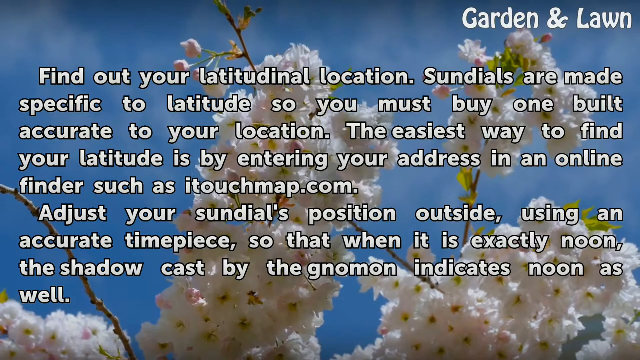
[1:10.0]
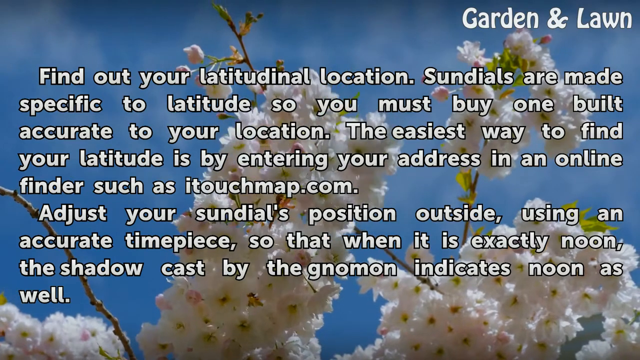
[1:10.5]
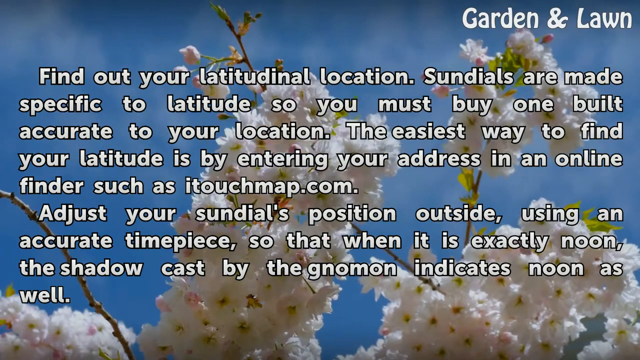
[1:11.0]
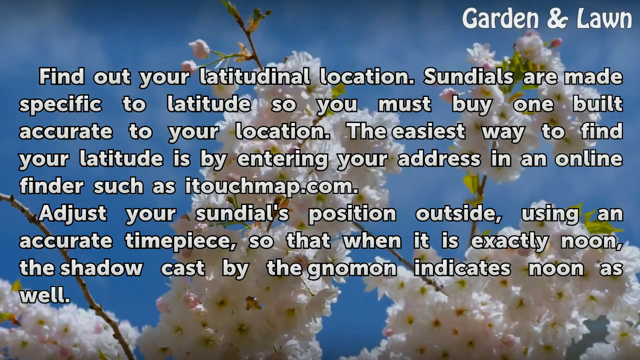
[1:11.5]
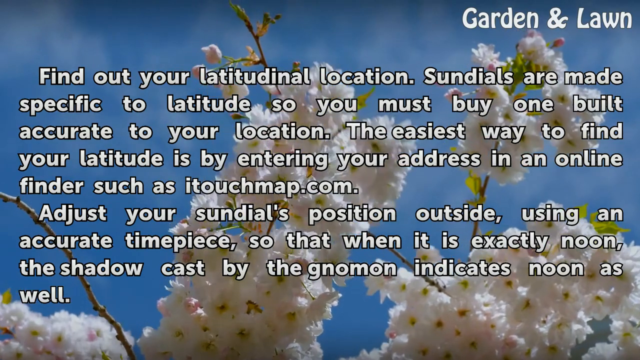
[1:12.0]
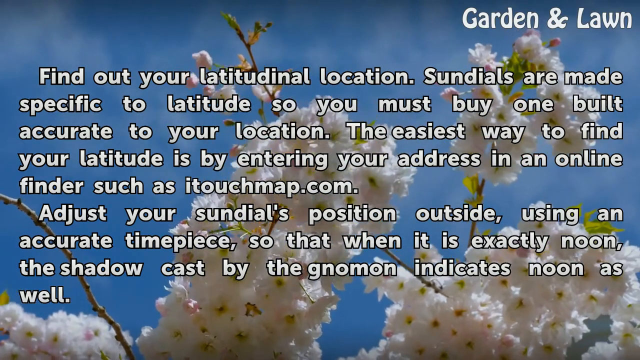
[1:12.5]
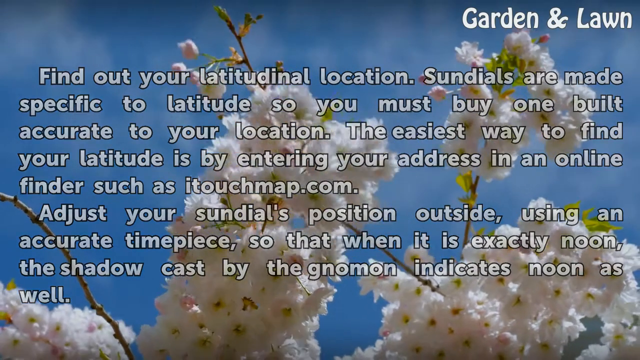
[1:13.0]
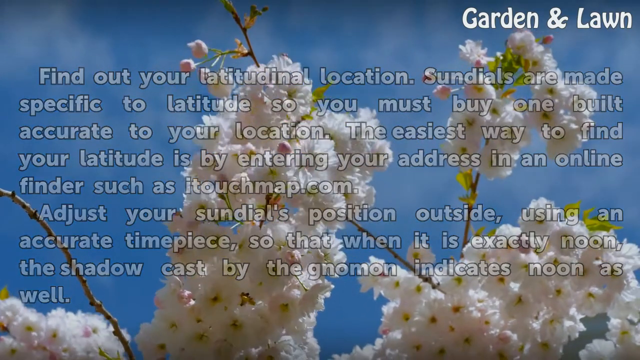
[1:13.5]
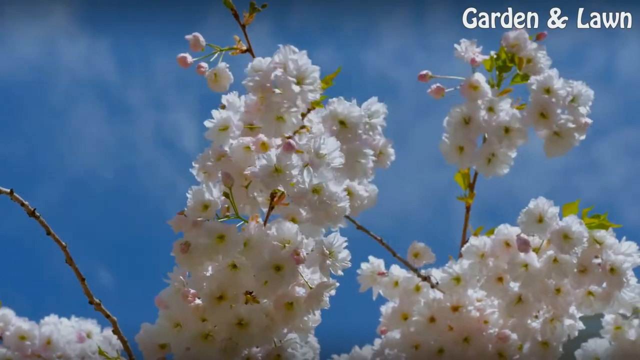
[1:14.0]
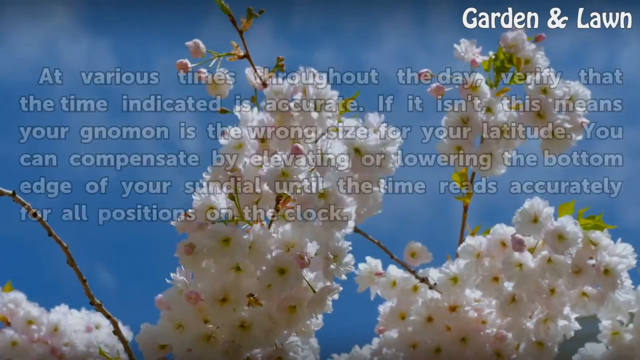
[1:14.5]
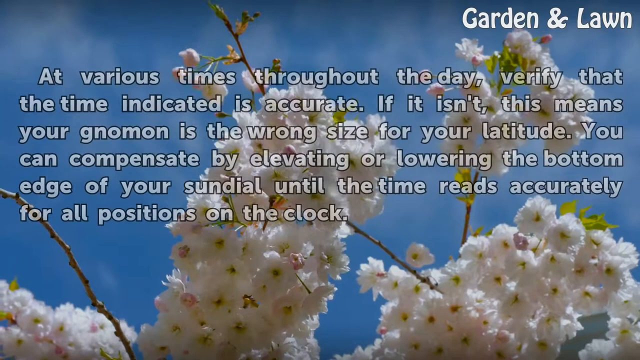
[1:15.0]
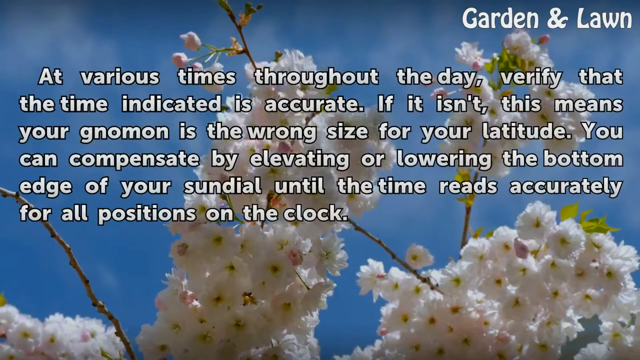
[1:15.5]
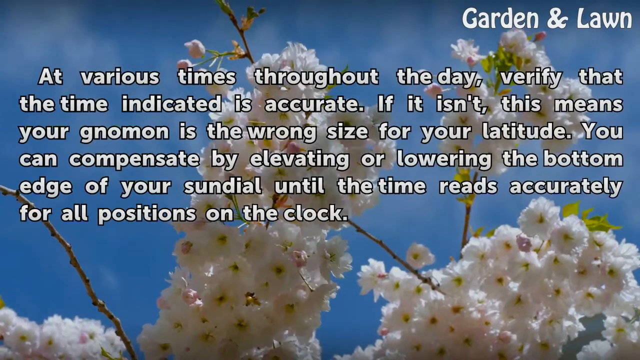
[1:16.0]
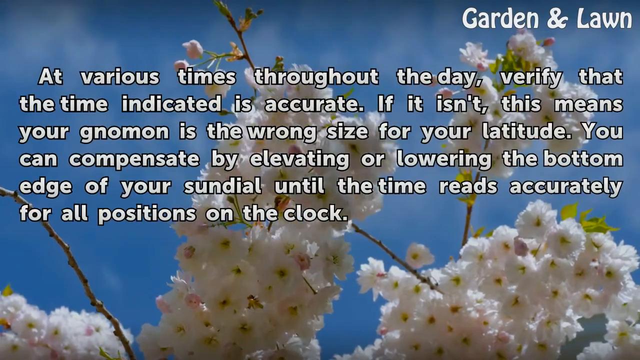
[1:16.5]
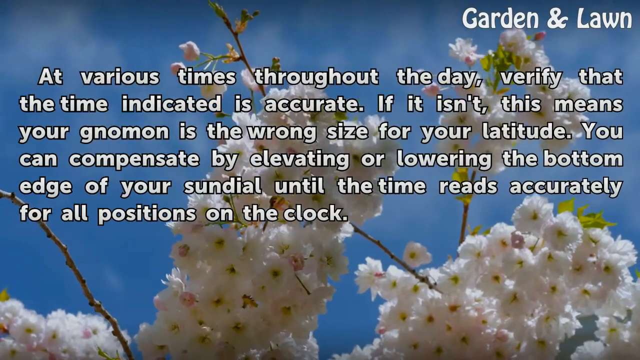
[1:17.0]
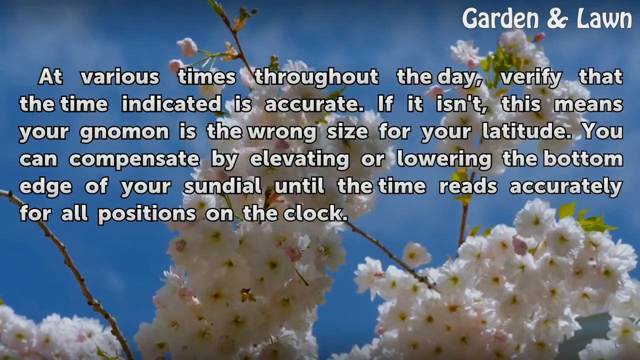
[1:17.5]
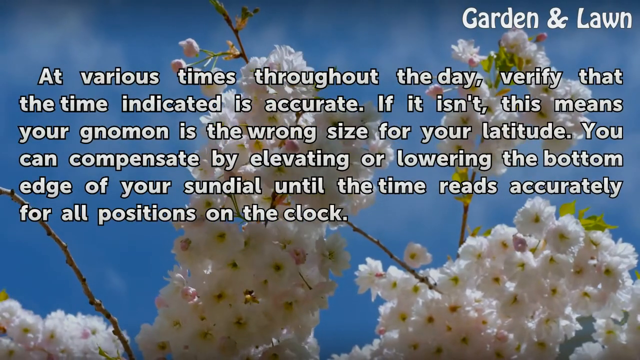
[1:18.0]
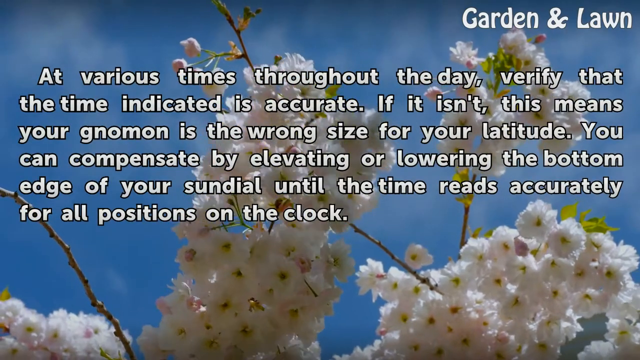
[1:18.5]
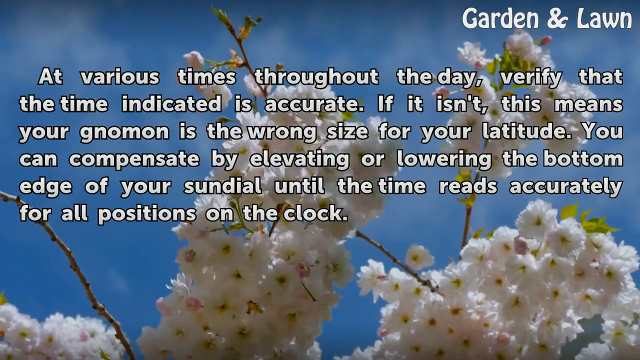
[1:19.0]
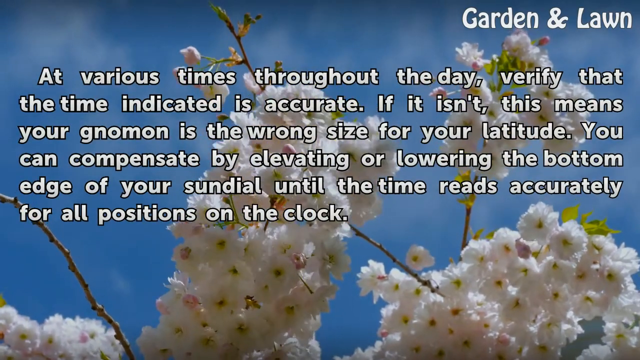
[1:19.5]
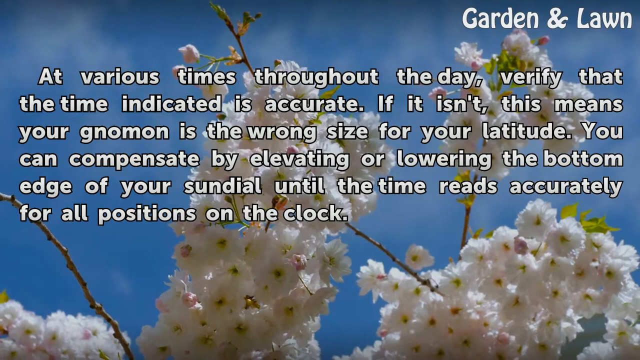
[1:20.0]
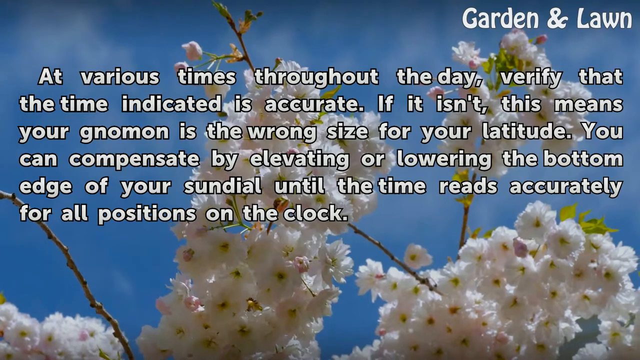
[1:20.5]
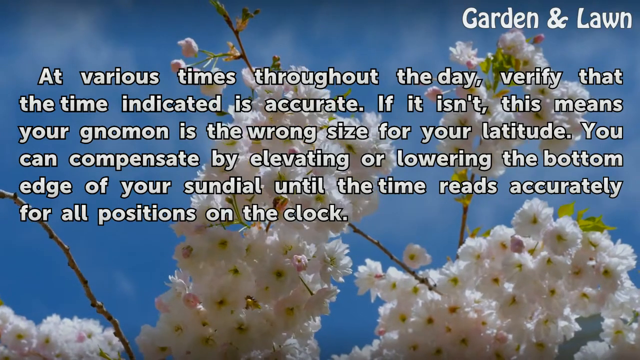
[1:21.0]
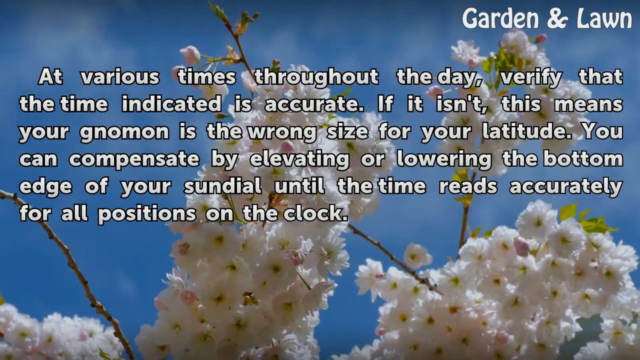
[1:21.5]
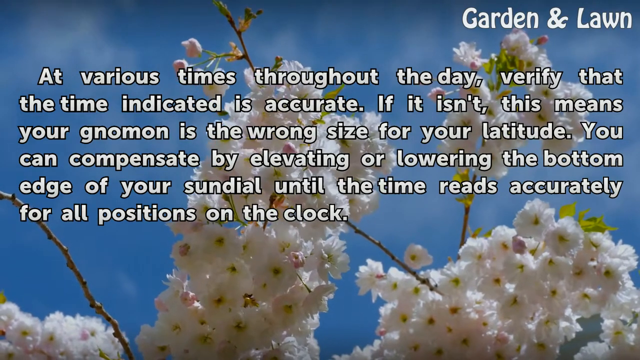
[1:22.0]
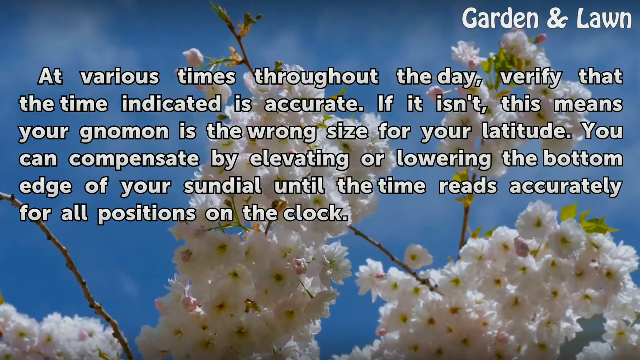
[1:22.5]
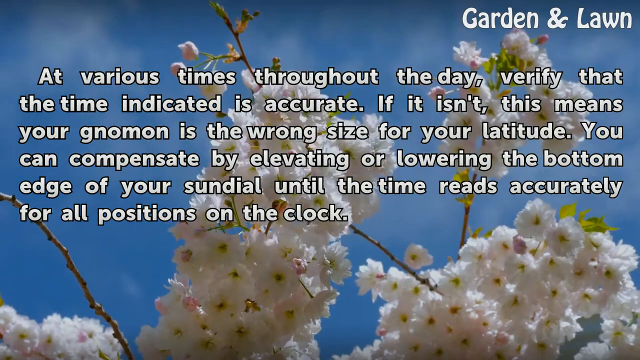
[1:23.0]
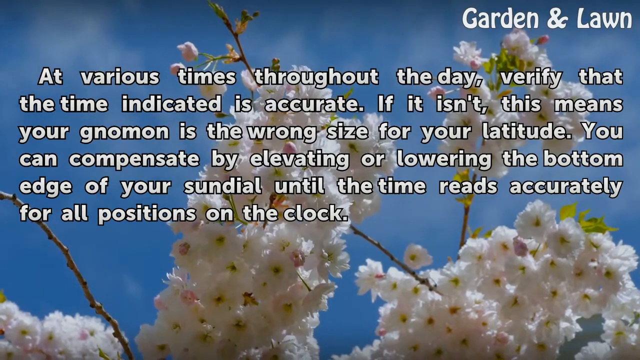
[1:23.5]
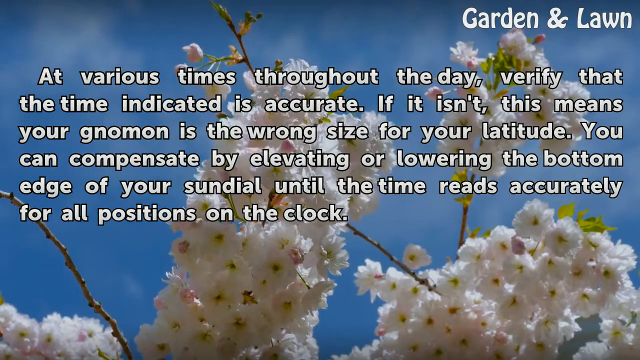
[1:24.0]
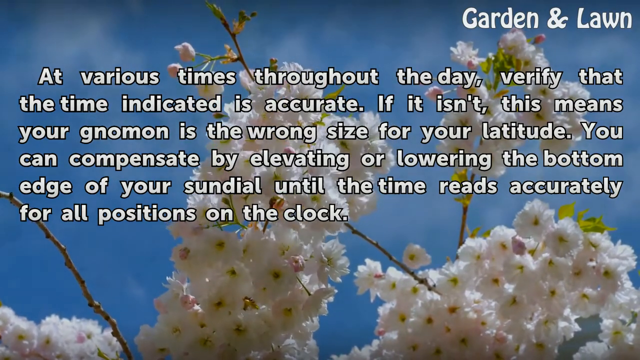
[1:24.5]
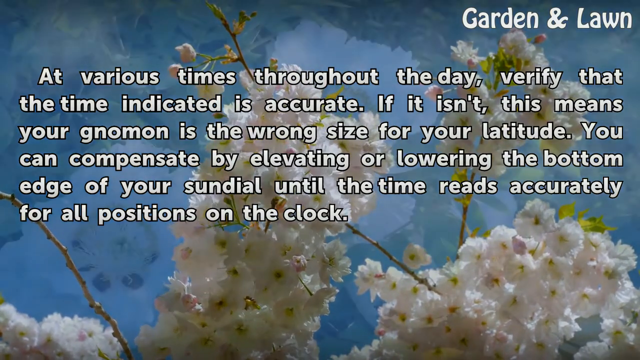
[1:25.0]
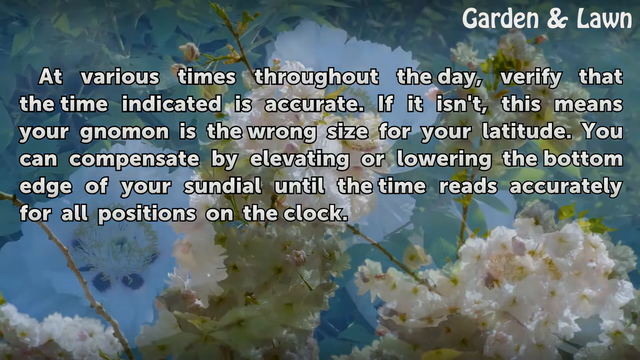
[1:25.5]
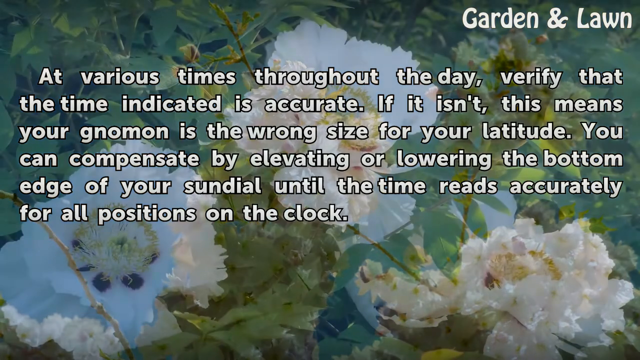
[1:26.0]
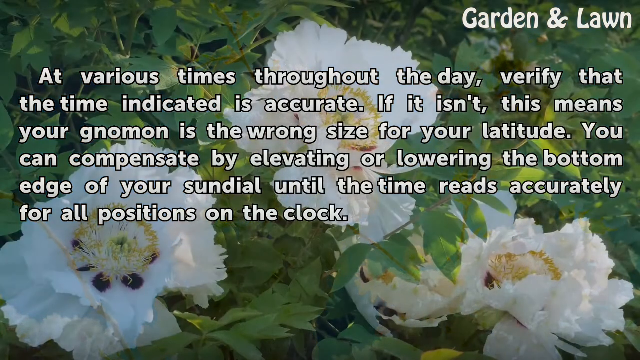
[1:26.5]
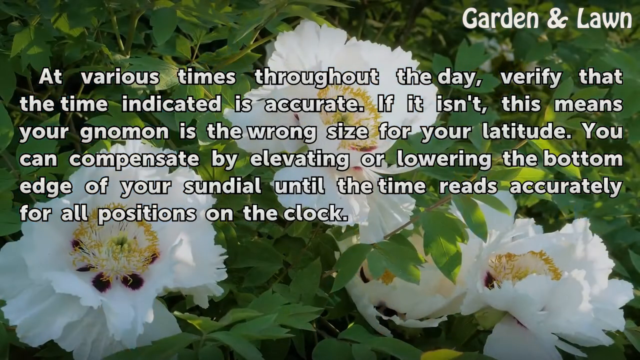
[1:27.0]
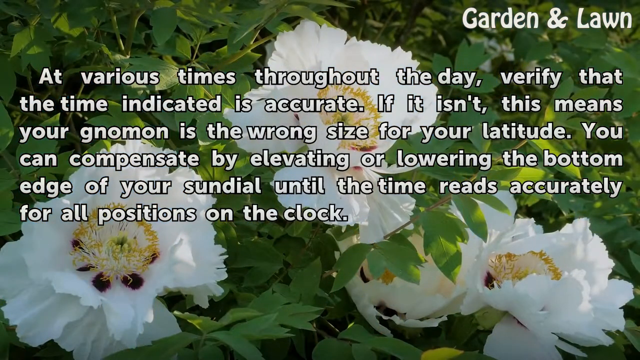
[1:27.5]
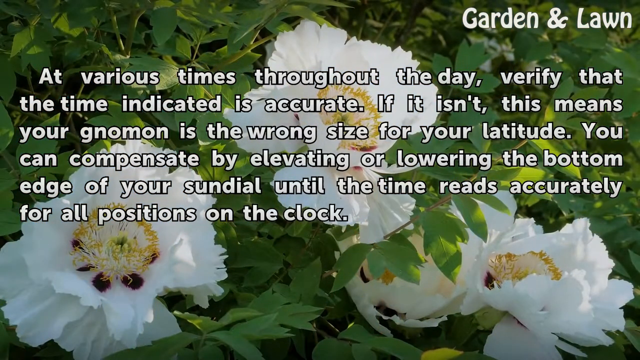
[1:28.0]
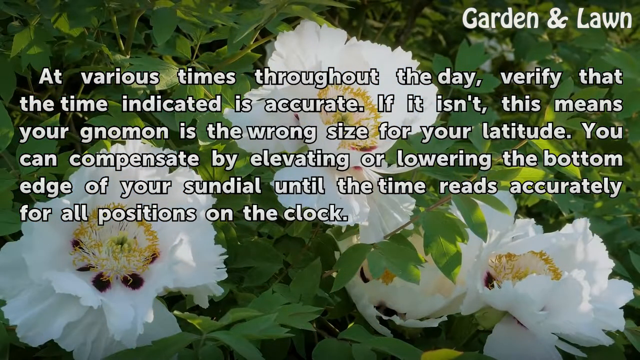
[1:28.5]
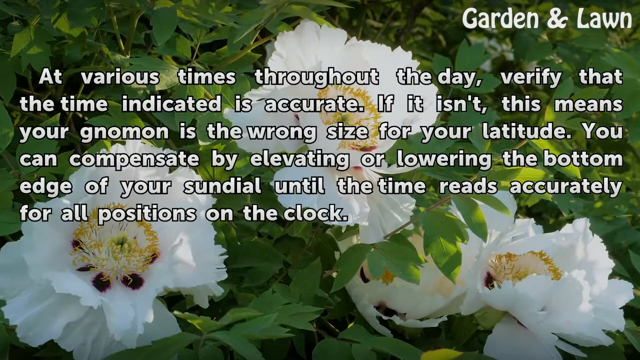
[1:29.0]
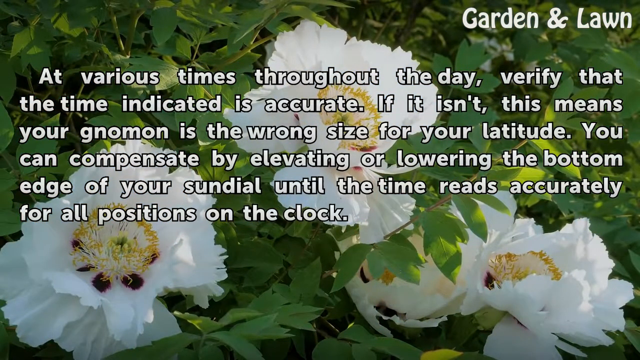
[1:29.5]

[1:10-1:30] The instructions continue: sundials are made specific to certain locations, and the latitude can be found by entering an address on itouchmap.com. The sundial's position is then adjusted outside using an accurate timepiece so that at exactly noon the shadow indicates noon.